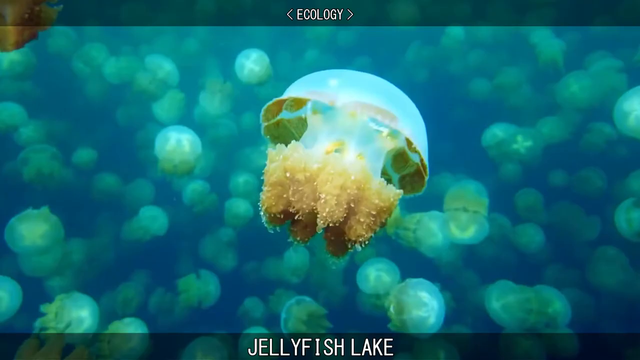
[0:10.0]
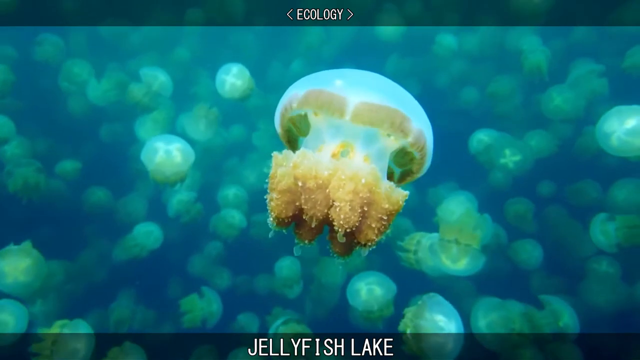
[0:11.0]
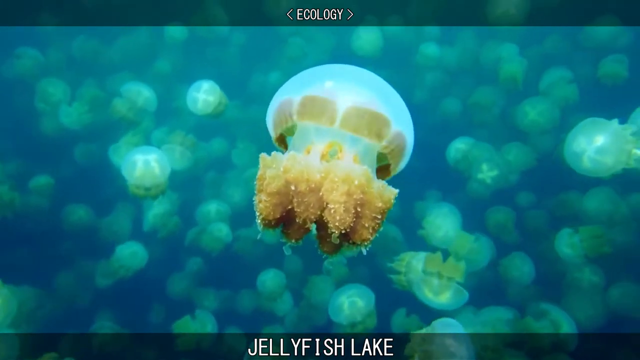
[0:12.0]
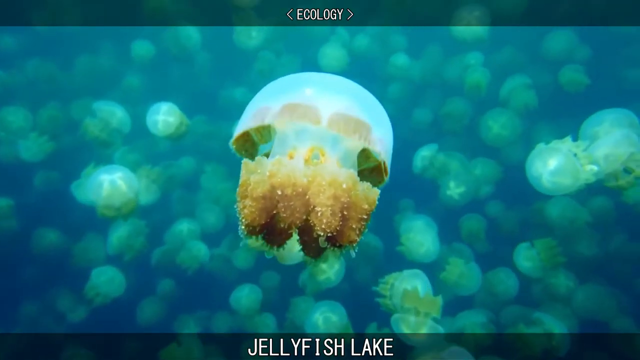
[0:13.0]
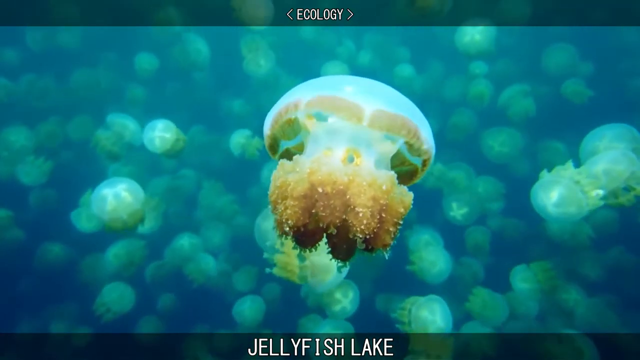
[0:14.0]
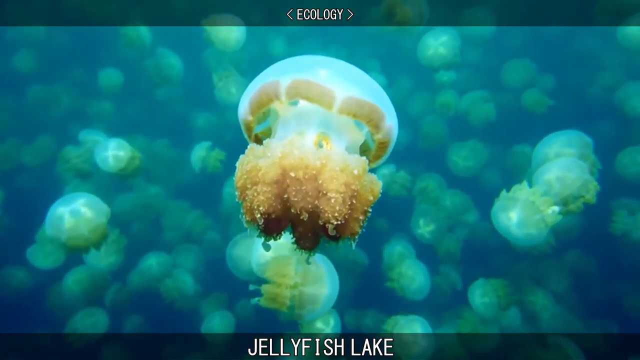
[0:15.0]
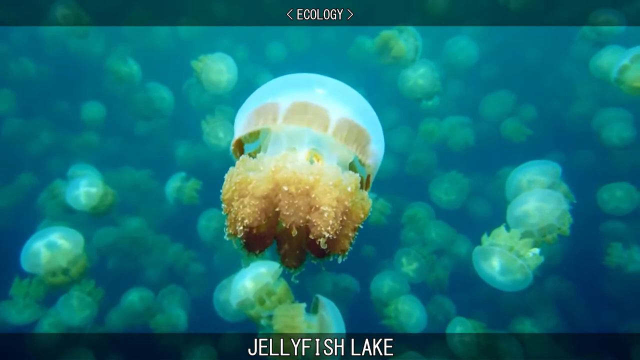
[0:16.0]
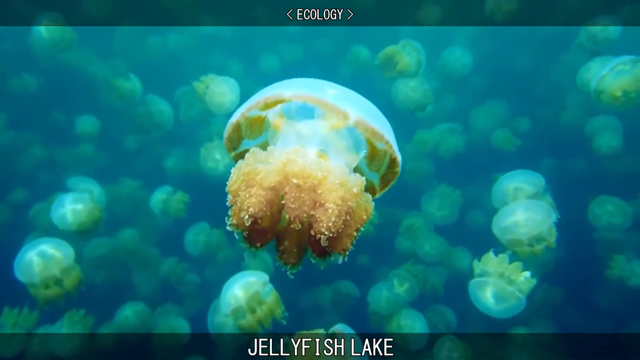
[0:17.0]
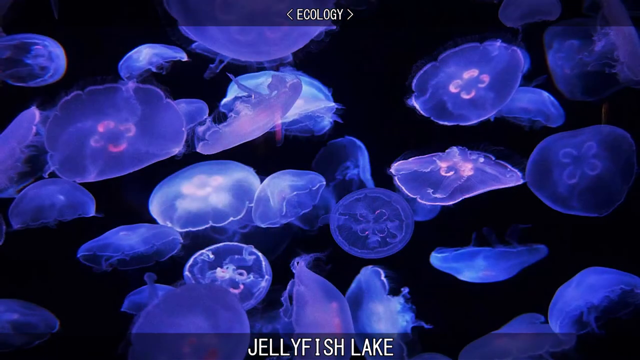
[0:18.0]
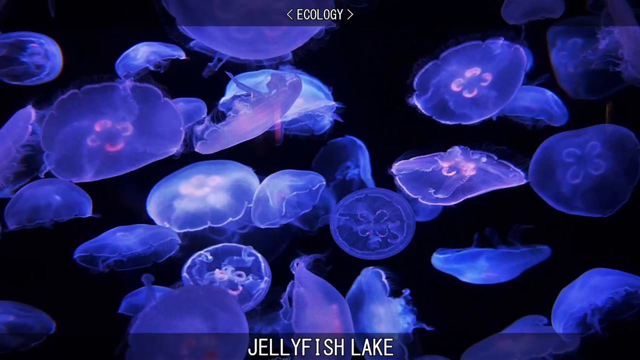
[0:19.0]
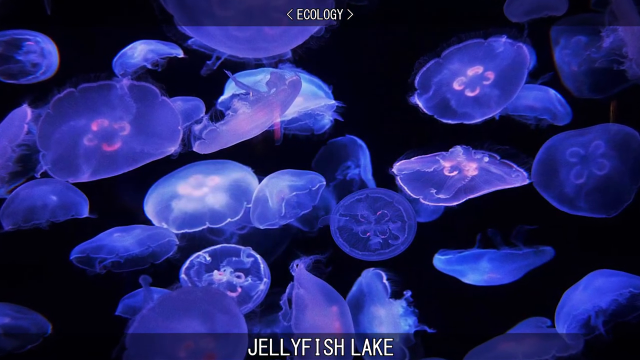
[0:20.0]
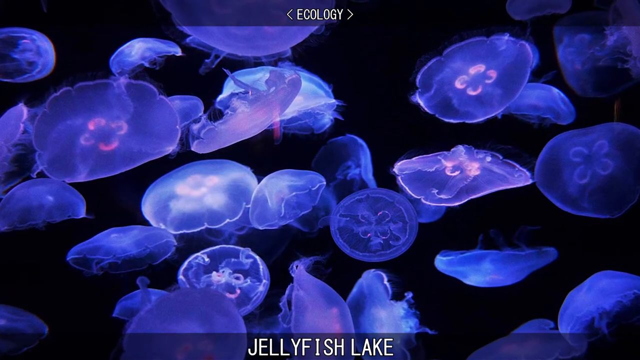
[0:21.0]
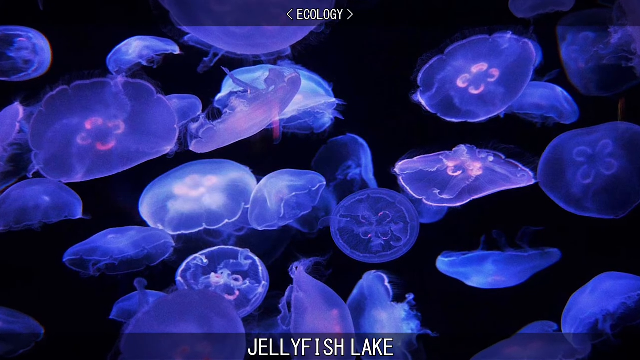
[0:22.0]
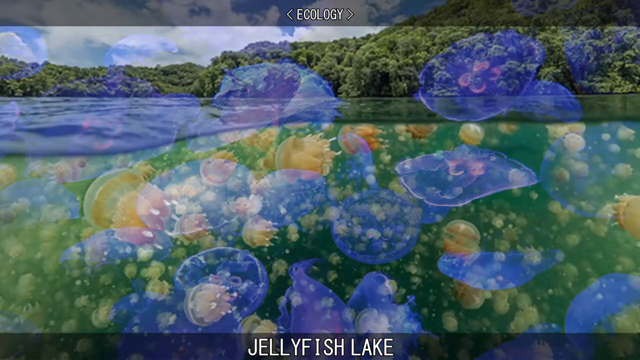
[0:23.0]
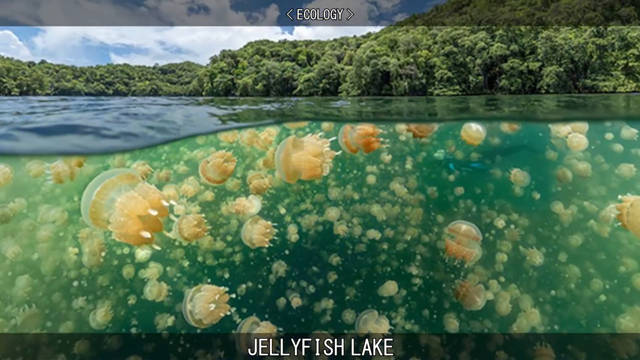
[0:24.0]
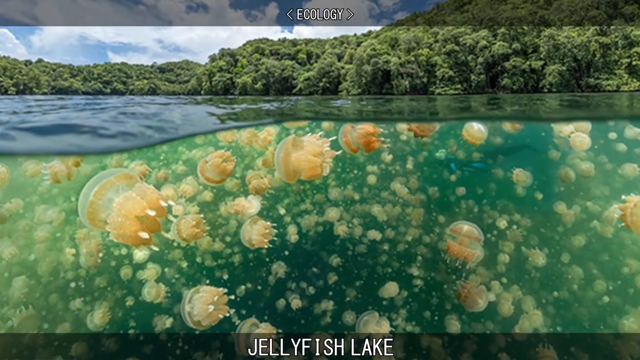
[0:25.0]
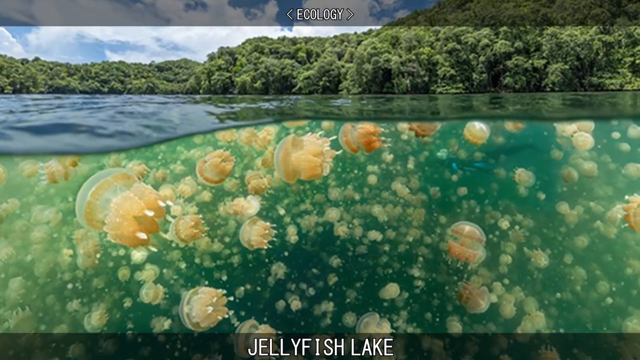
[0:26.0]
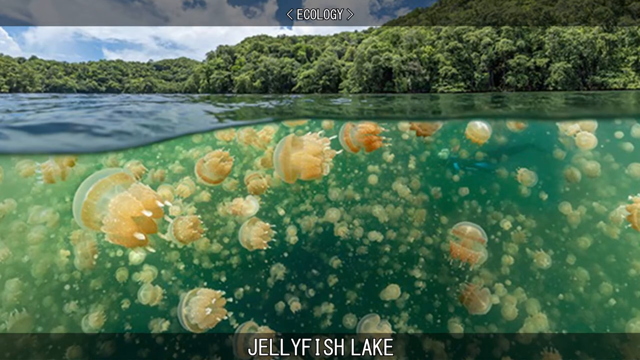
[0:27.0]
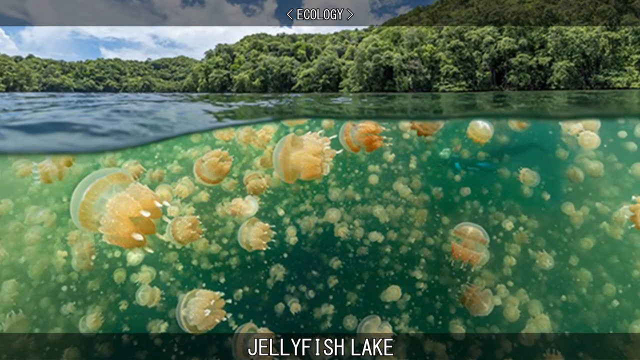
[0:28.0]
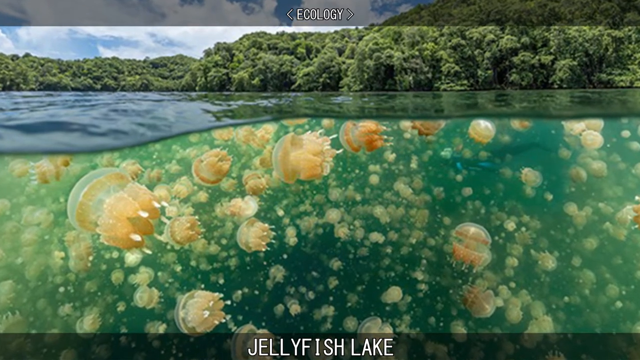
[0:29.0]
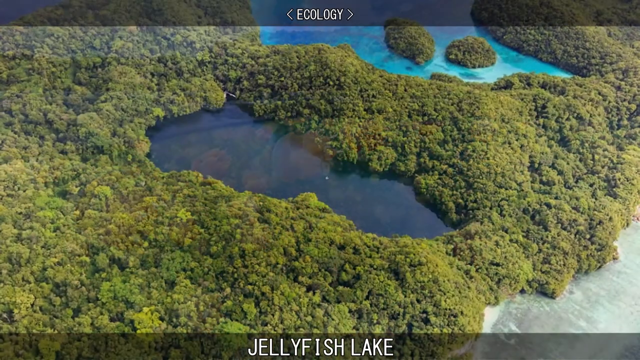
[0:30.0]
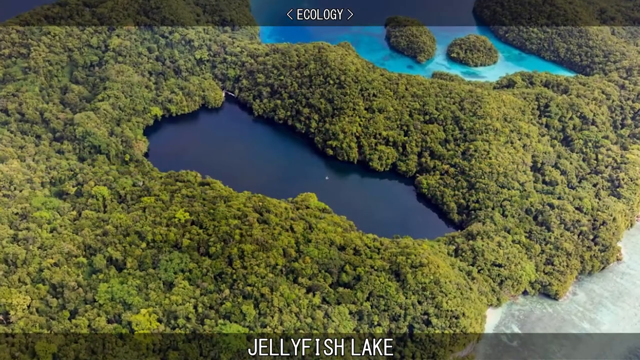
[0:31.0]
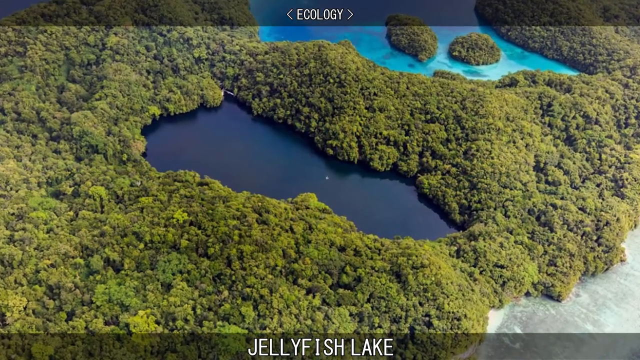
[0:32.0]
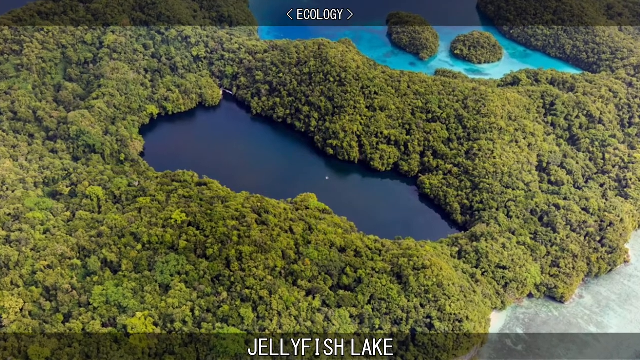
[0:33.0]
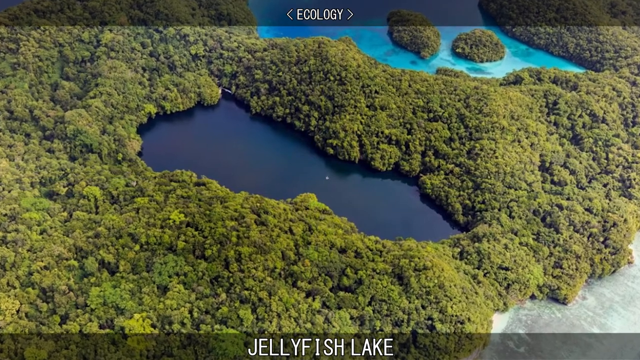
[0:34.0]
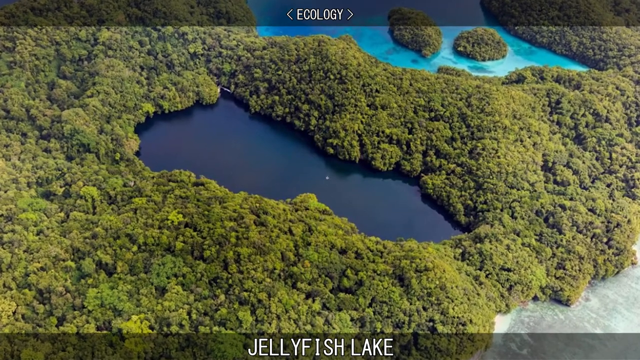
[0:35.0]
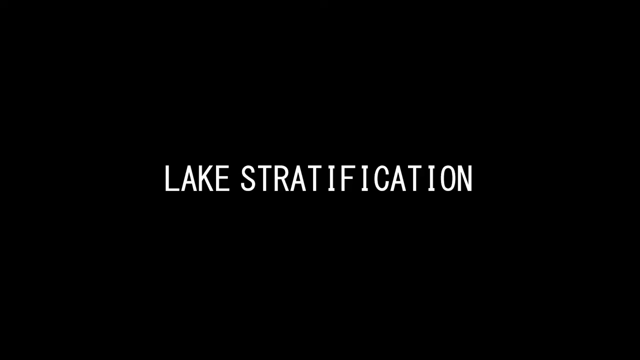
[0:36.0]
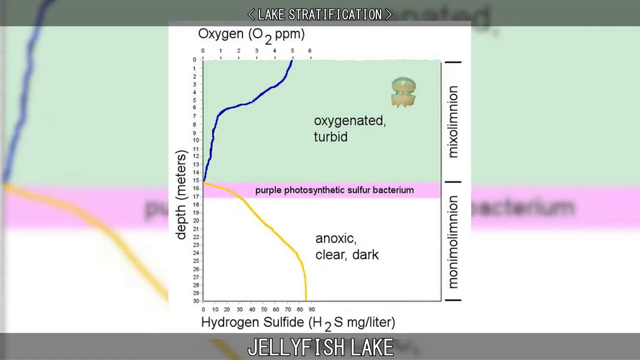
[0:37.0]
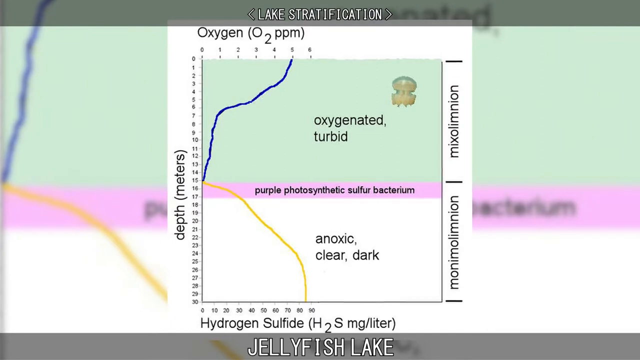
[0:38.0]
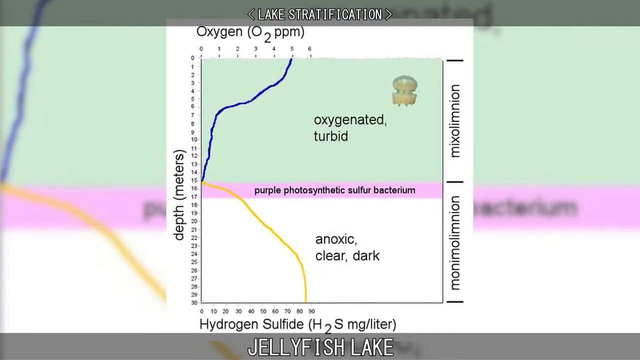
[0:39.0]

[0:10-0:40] Many jellyfish are shown in the water, completely translucent. The view moves into the lake, where there are thousands and thousands of these jellyfish. The lake looks like it is in the middle of dense trees. The jellyfish are very translucent and do not have many tentacles; instead they seem to have nubby little growths, with none of the long stringy tentacles usually seen. The video then moves to the ecology of how they live, showing the lake stratification and where the bacteria are, where the water is kind of murkier and opaque, and where the jellyfish hang out.